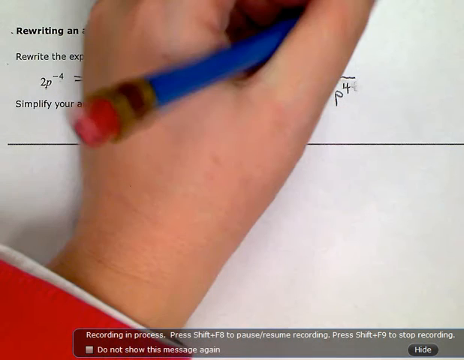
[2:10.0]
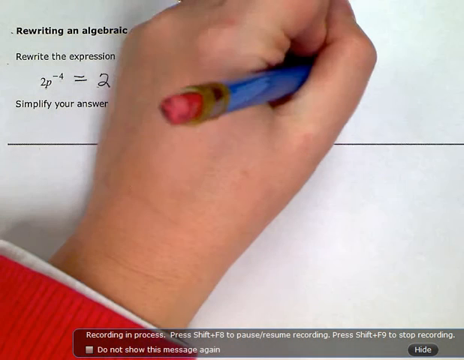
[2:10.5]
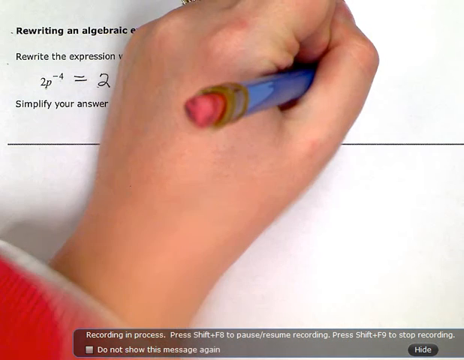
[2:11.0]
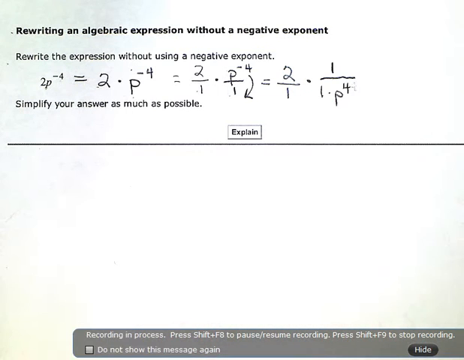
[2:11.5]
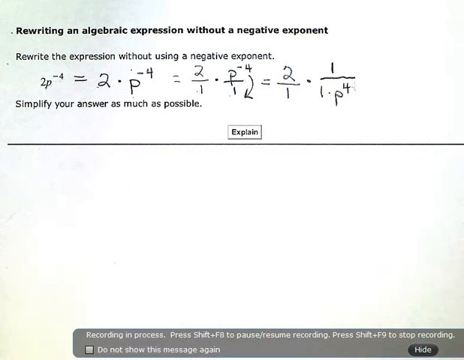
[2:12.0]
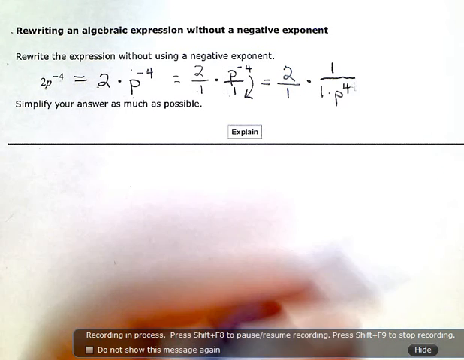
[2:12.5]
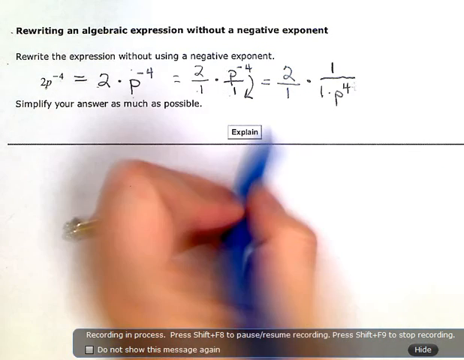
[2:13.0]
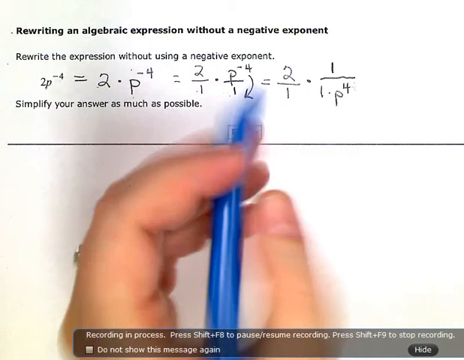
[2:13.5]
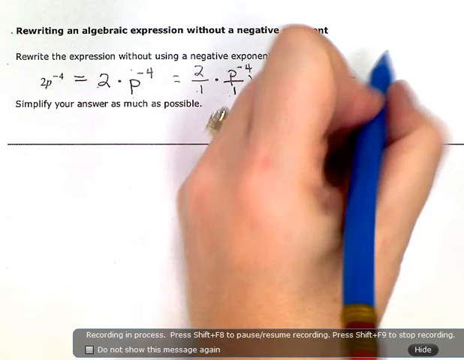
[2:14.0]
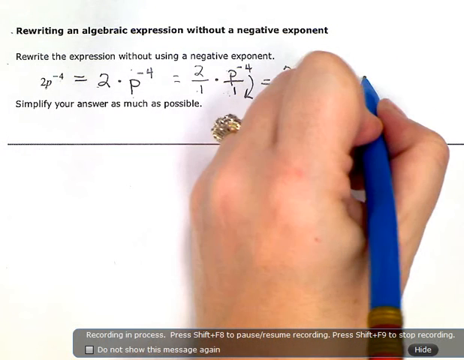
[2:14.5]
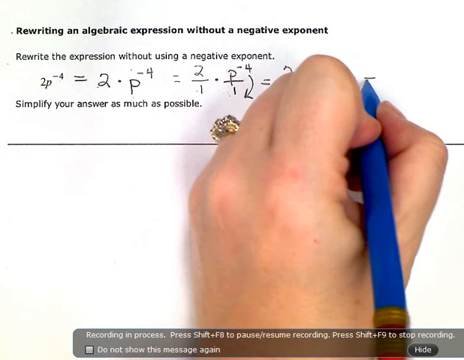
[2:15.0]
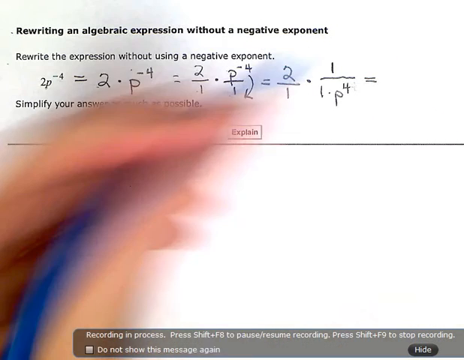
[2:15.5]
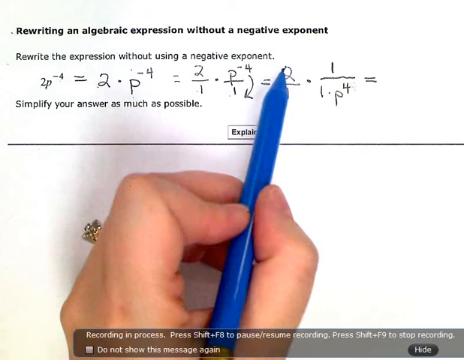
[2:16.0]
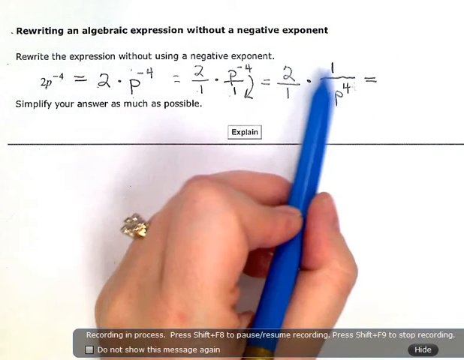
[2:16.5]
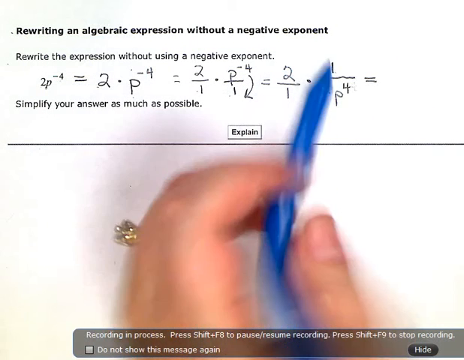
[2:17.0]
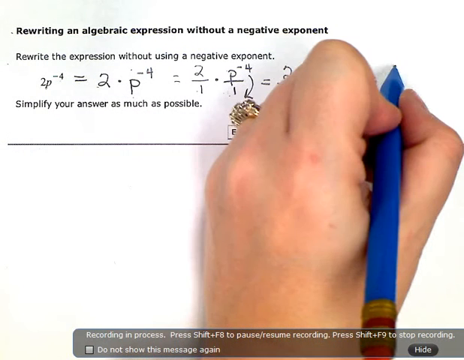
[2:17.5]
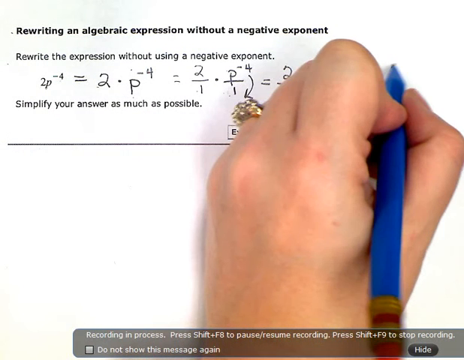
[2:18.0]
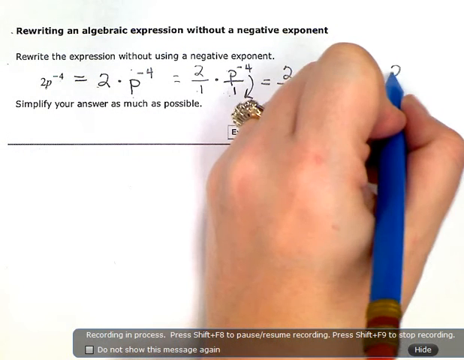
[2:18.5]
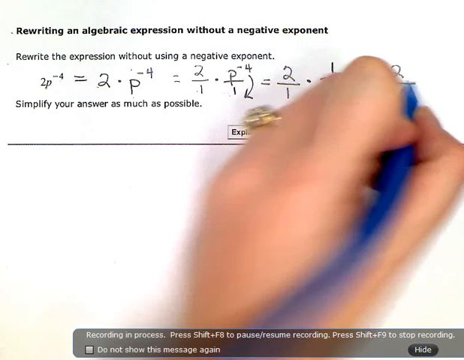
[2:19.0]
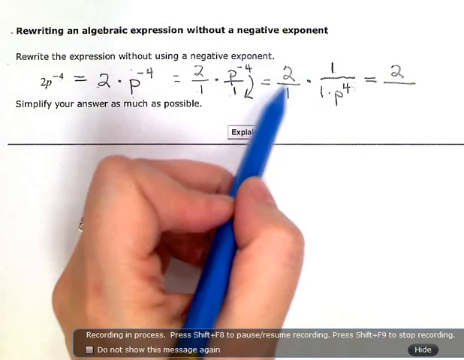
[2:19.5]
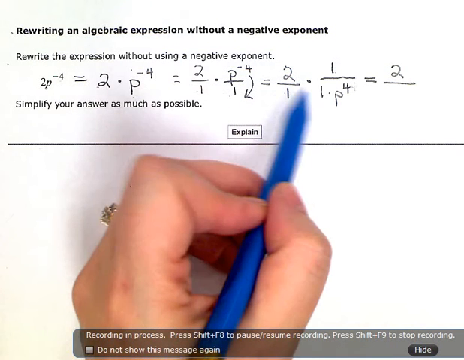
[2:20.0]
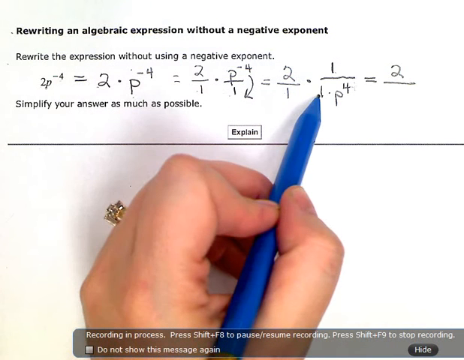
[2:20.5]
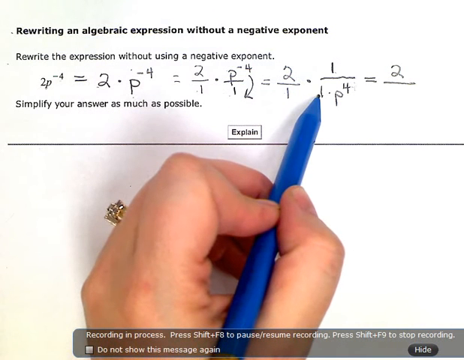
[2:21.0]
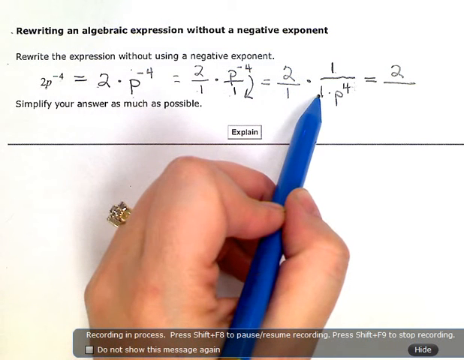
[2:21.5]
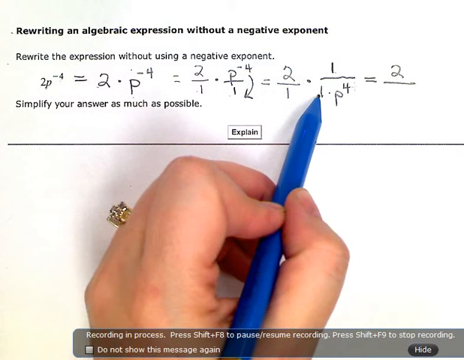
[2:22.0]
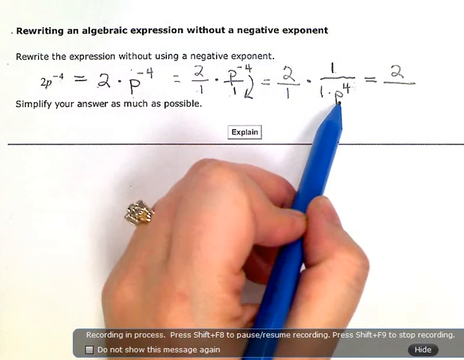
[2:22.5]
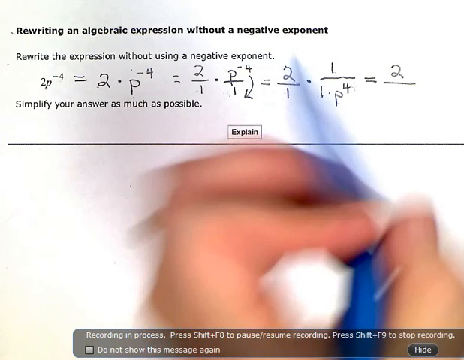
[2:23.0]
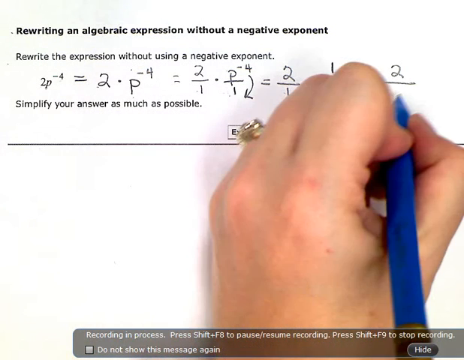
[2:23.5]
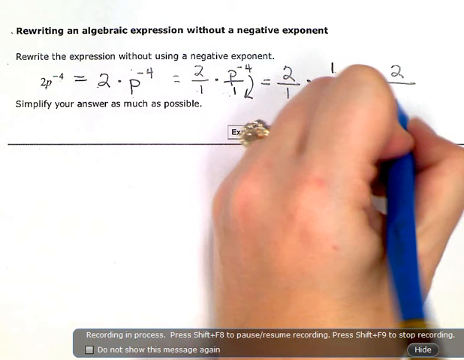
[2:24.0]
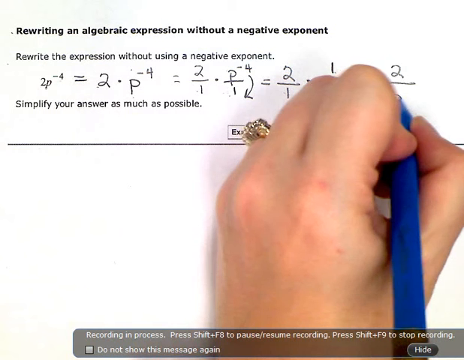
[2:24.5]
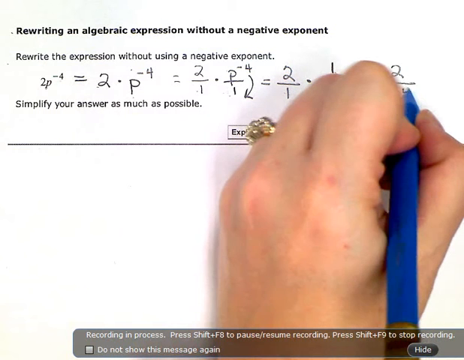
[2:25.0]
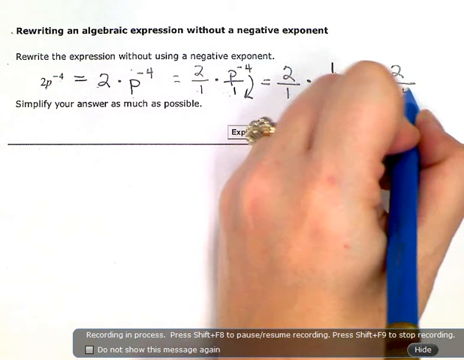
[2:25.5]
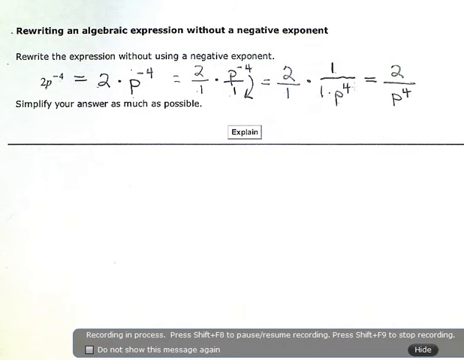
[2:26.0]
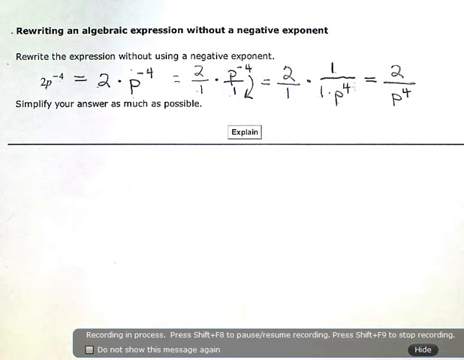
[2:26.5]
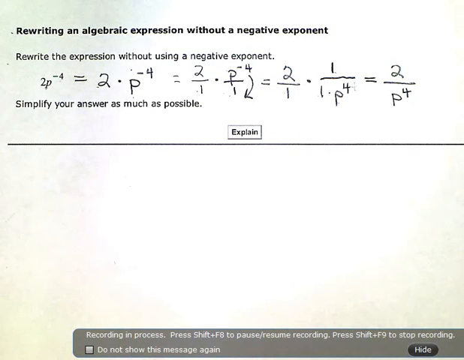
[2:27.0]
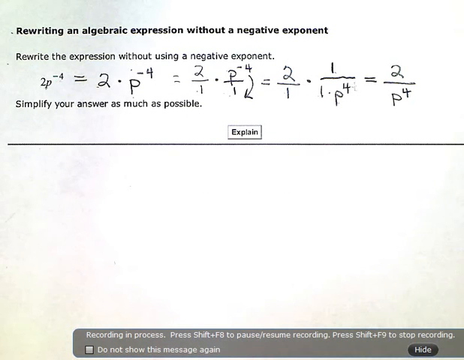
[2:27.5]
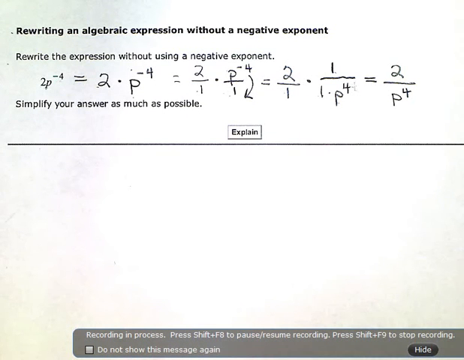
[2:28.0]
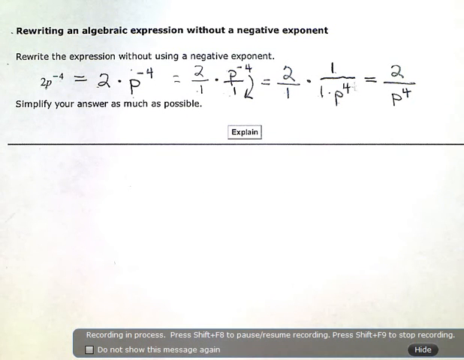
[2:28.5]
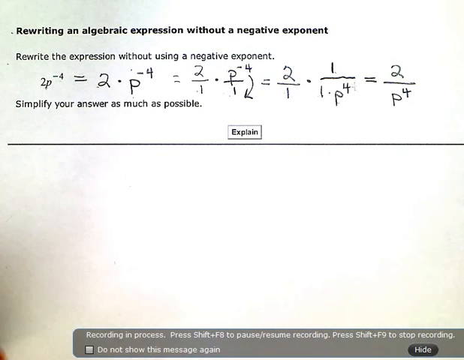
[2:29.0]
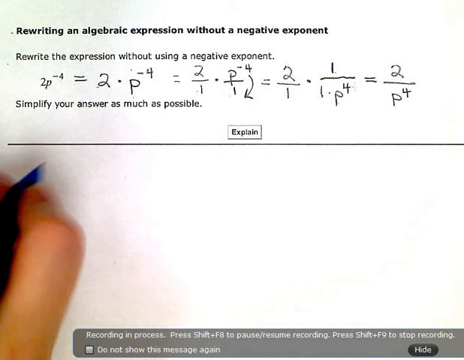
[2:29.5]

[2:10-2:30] The author's hand is on the screen, showing the edge of his red sleeve with a white liner on the inside of the edge. He holds a blue pencil with an eraser on the end; it looks to be made of plastic and looks to have a marker tip. Using the pen as a pointer, he continues solving the problem, placing an equal sign with 2 over p to the fourth beside it. He then moves his hand out of the way so this part of the problem can be seen.